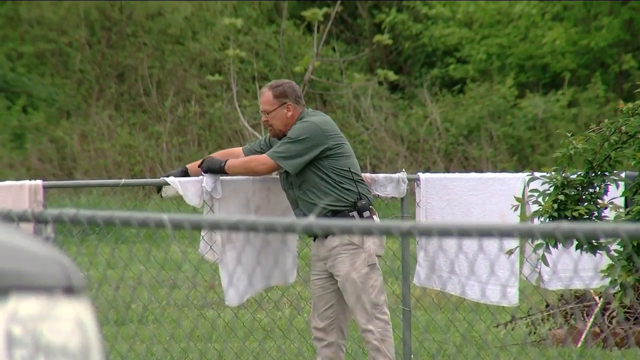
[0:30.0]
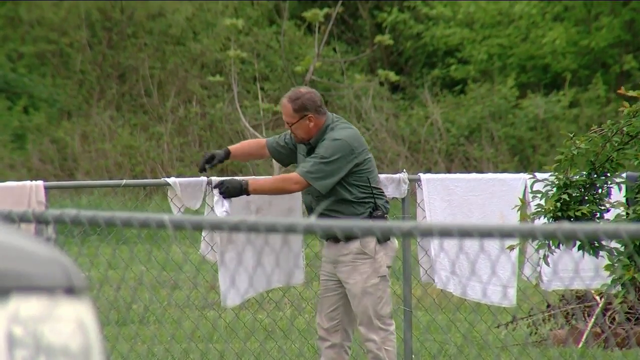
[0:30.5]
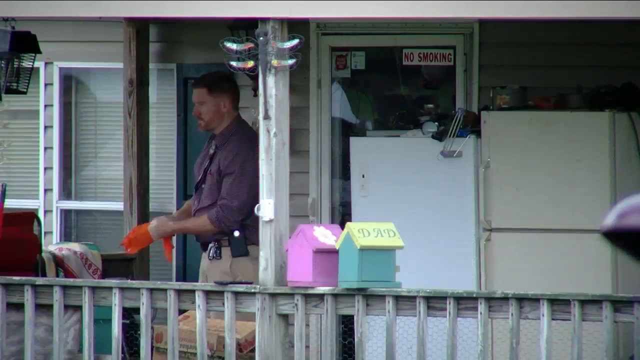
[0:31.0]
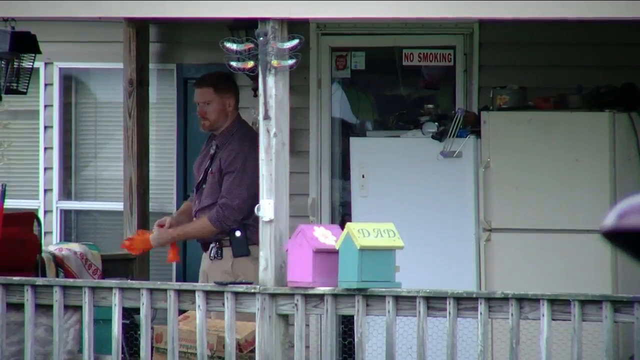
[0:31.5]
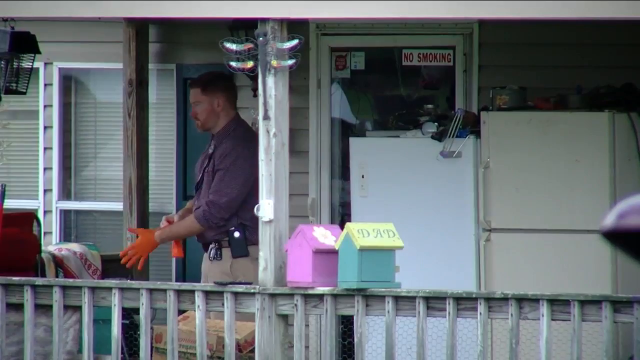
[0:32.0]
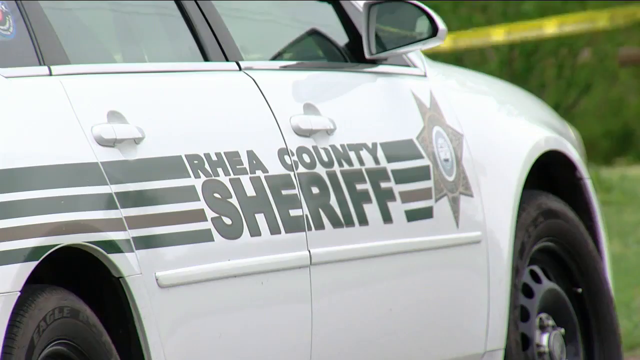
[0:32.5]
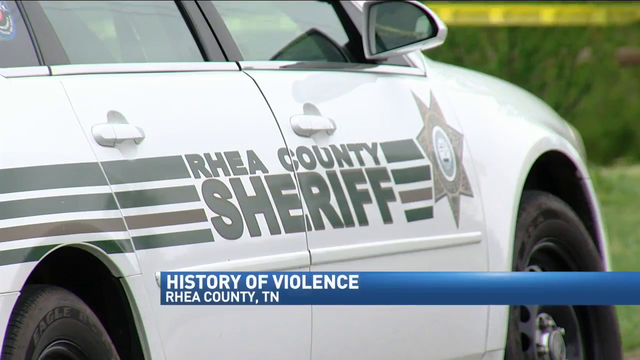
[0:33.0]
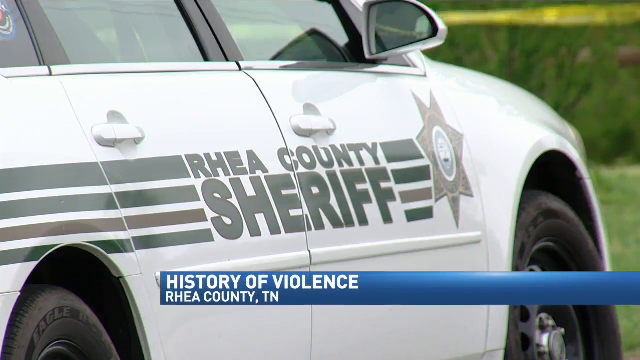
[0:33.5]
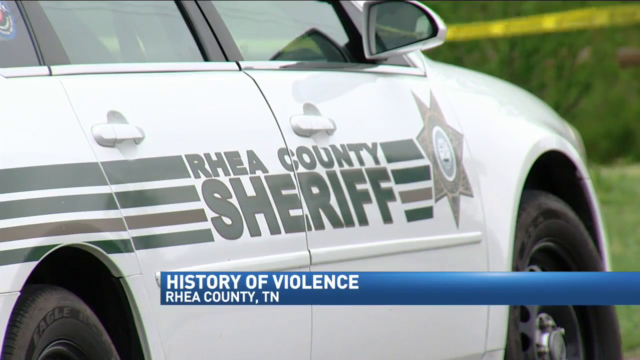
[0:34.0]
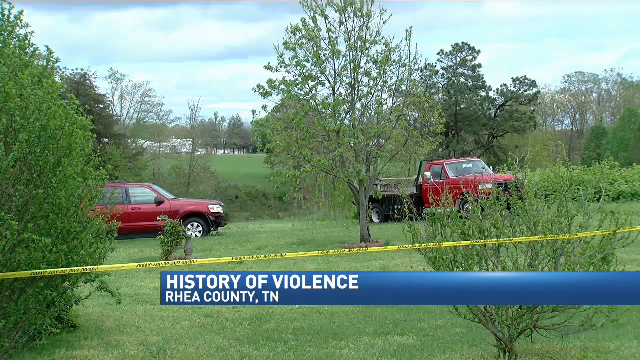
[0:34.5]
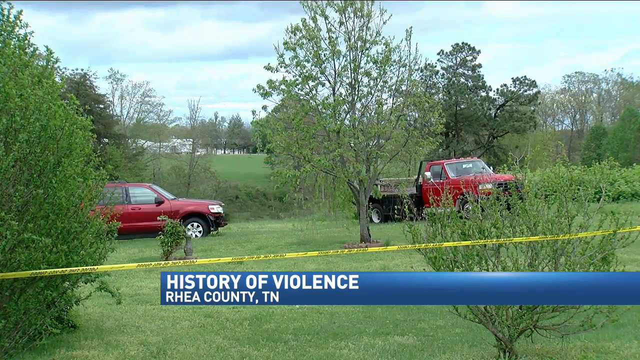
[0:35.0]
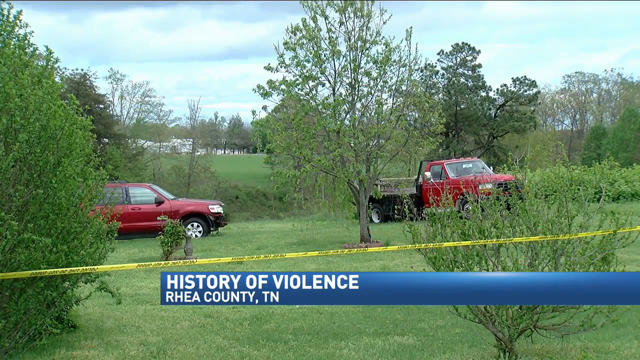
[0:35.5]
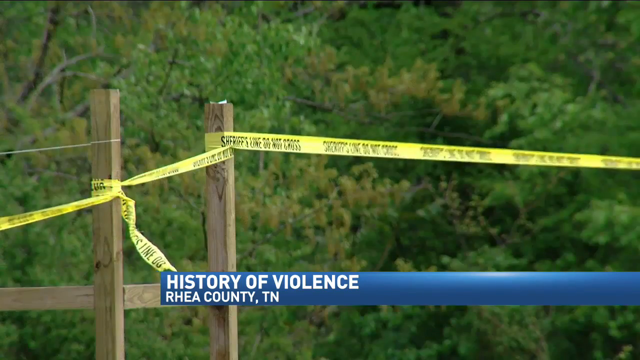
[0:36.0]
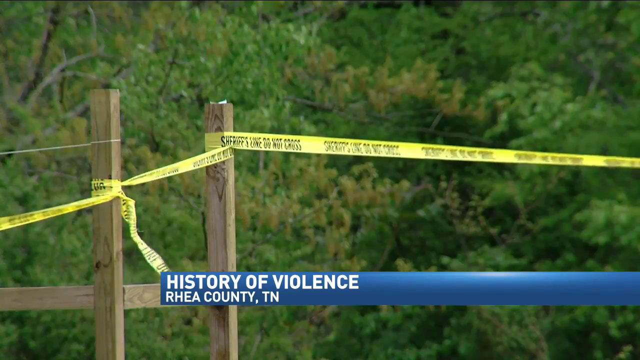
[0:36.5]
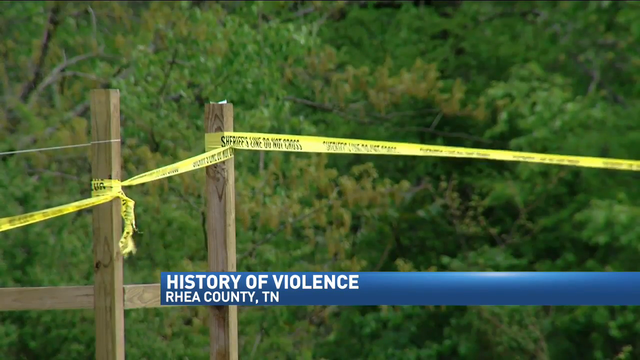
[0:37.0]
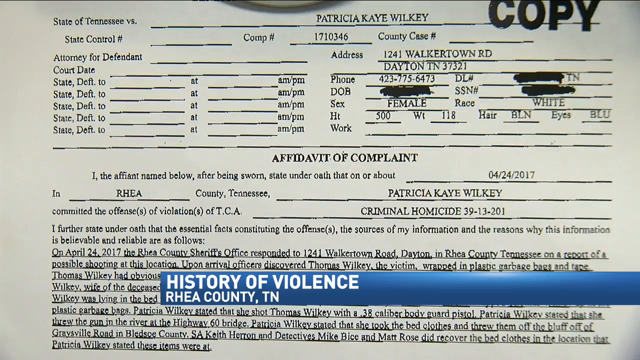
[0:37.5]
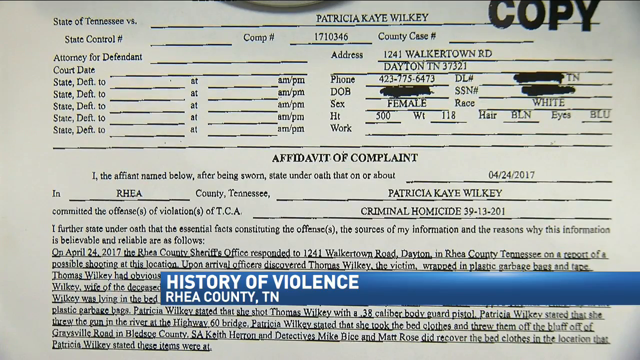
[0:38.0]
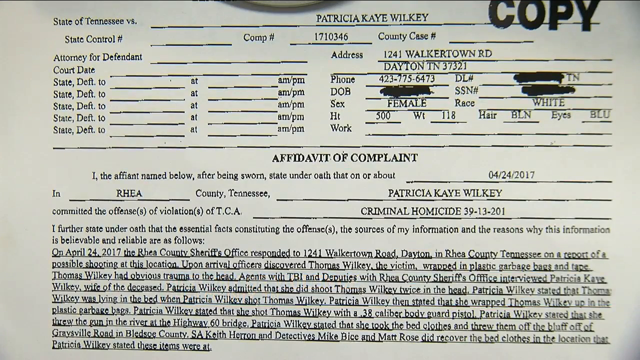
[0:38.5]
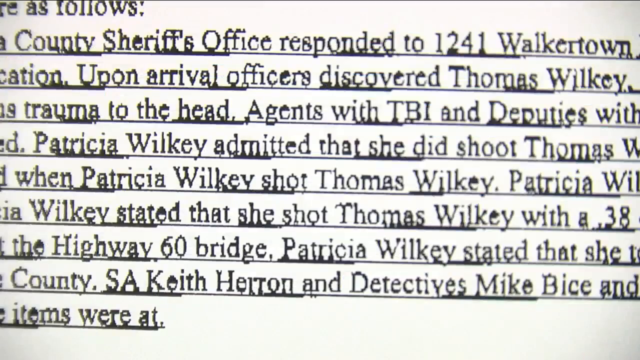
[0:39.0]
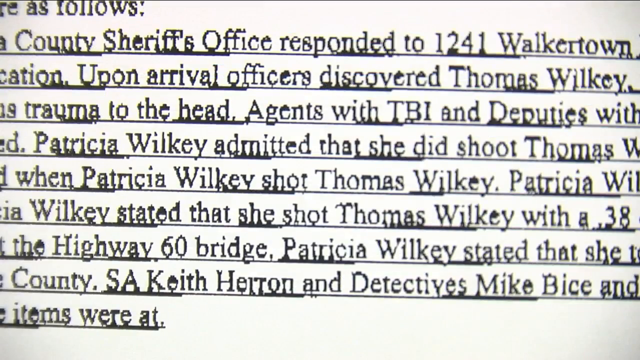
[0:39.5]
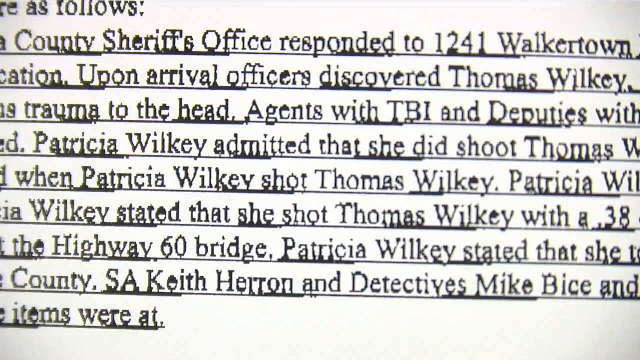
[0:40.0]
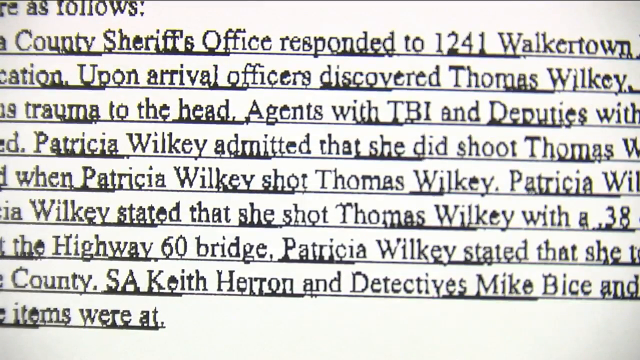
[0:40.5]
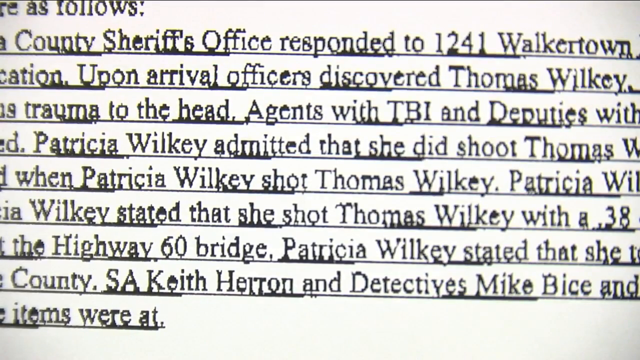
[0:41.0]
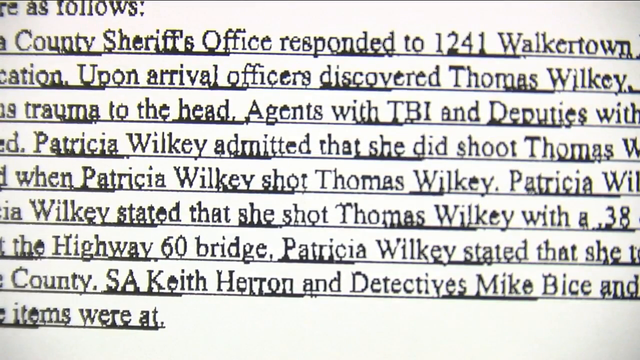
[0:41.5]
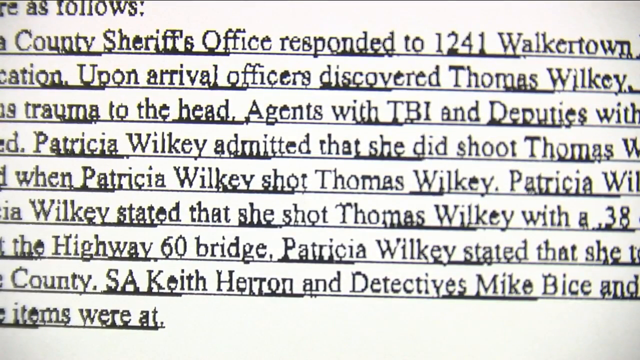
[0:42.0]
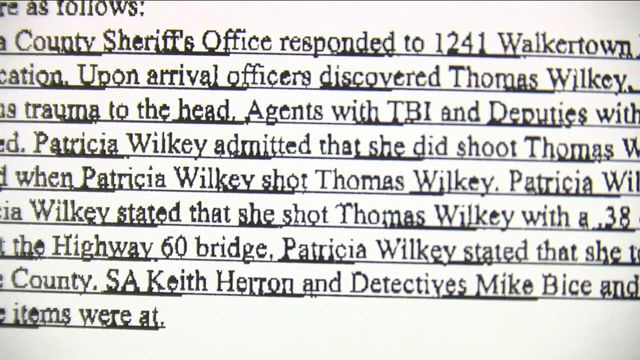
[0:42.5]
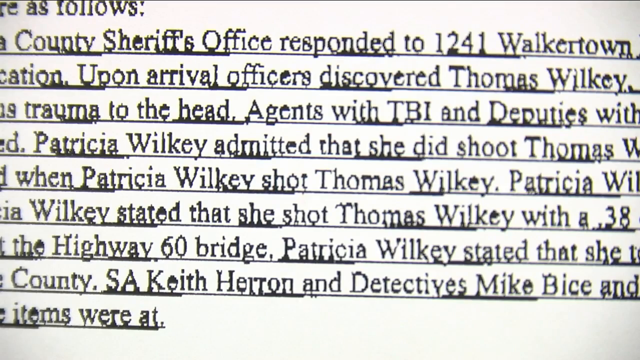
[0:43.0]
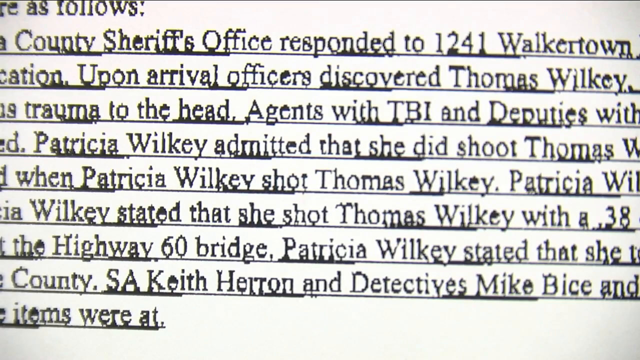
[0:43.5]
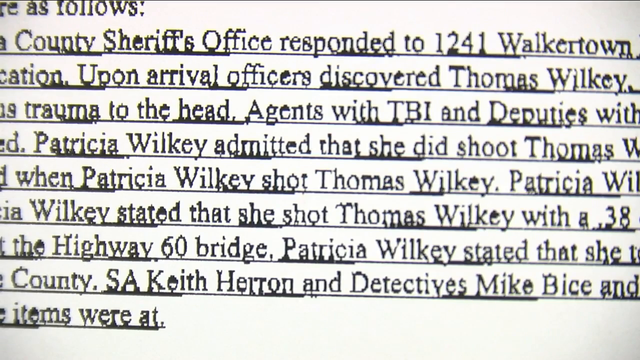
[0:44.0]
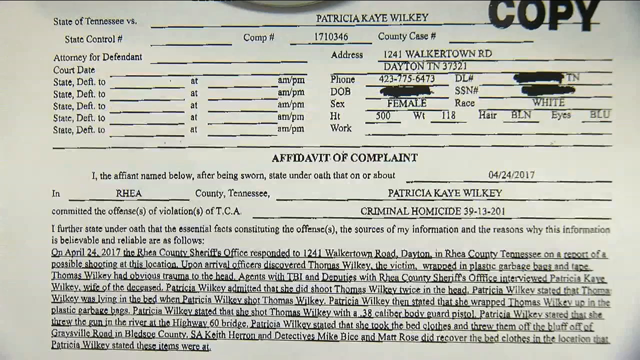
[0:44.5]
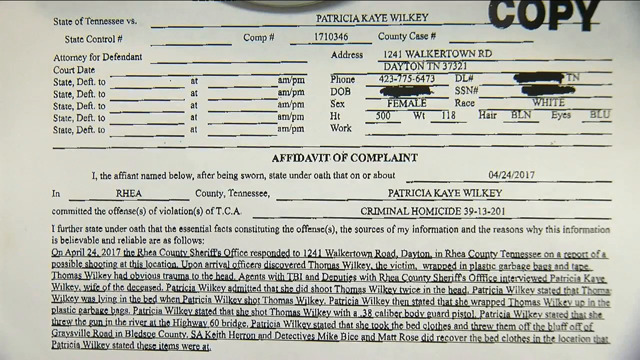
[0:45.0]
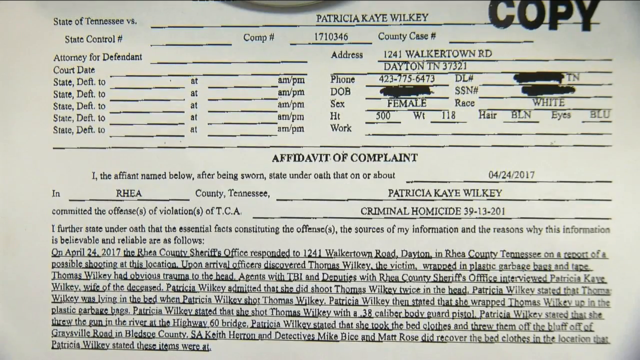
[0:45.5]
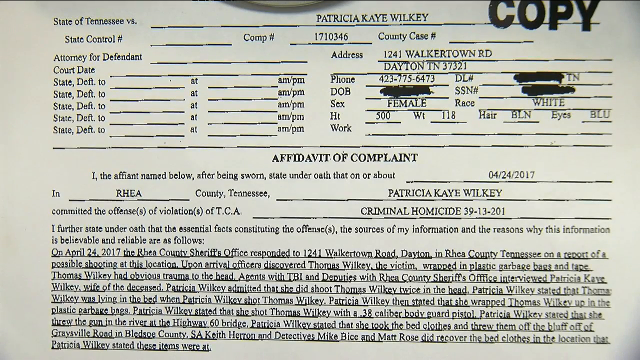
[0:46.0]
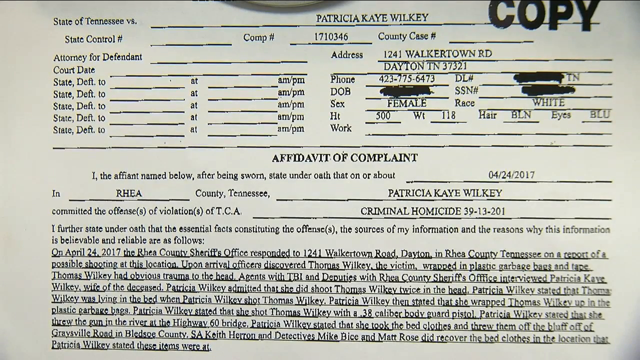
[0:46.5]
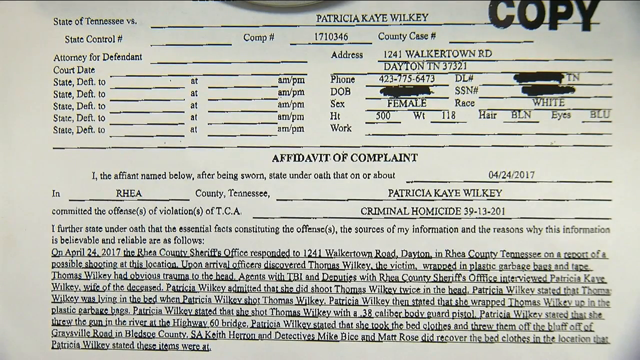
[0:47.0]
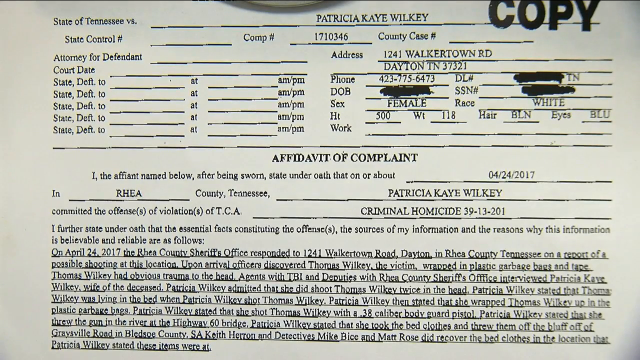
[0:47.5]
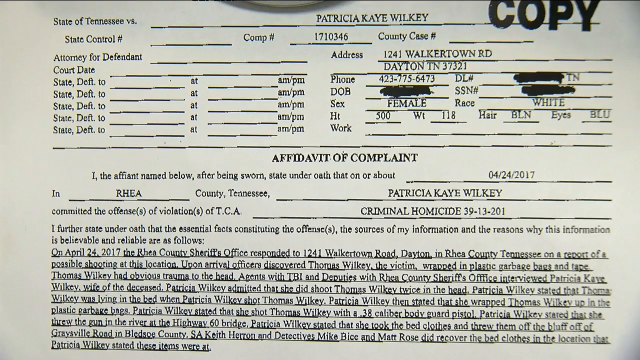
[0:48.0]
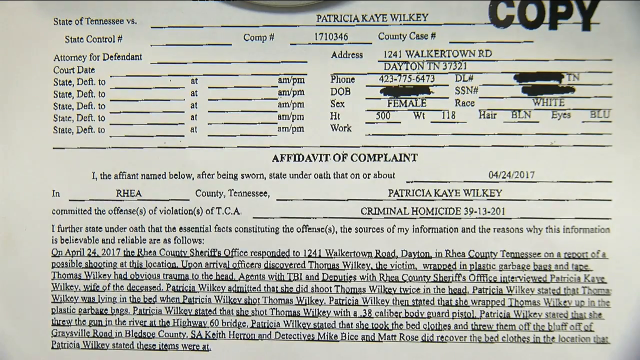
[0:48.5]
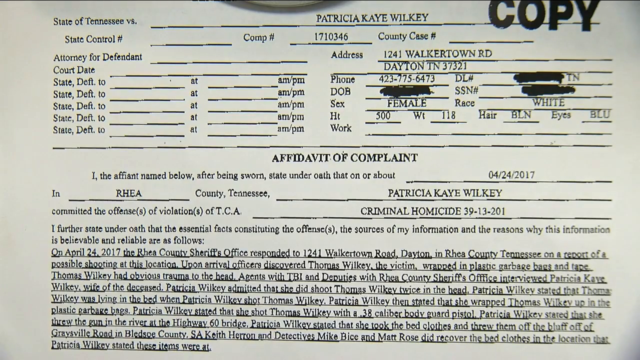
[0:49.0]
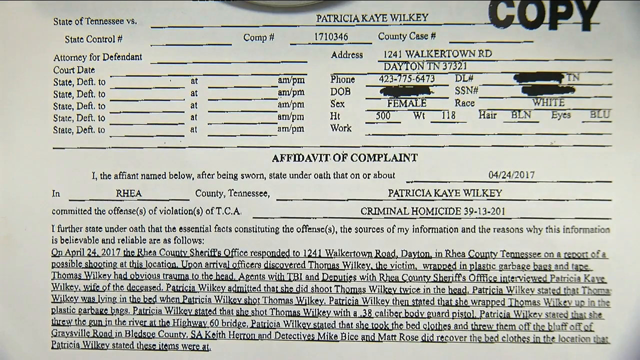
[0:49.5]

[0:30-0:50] A man with black gloves puts white clothing and fabrics on top of the metal fence. The scene switches to a man in a purplish-red shirt putting on orange gloves. Two birdhouses are to the side: one is pink with some kind of flower on top, and the other is blue with a yellow roof and the word "dad" on it. There appear to be a couple of outdoor freezers, and a door says "no smoking". A wooden fence trails around the area. The scene switches to a county sheriff vehicle, zoomed in a fair bit, and then to a red vehicle and a red truck with yellow police tape all around the area. The area is very field-like with lots of trees. The shot focuses on the yellow tape on a wooden post. Next comes some kind of document related to criminal homicide; it zooms in to show some of the wording and then zooms out again.